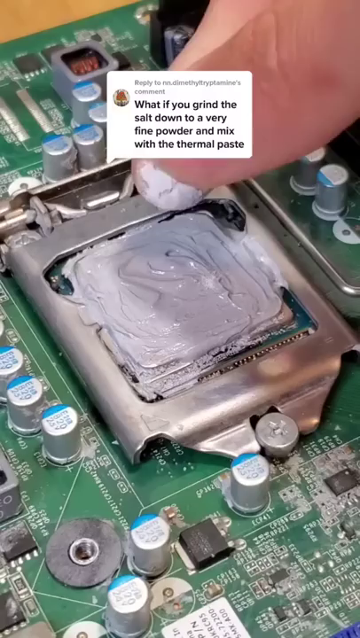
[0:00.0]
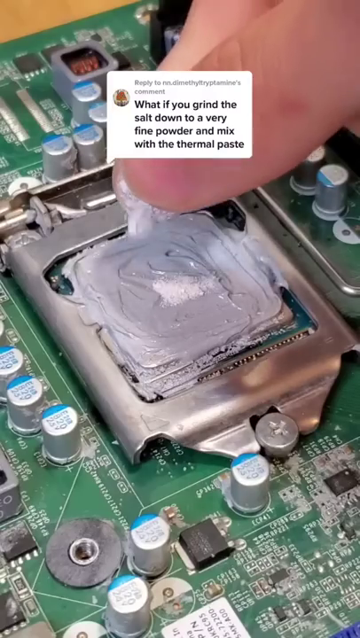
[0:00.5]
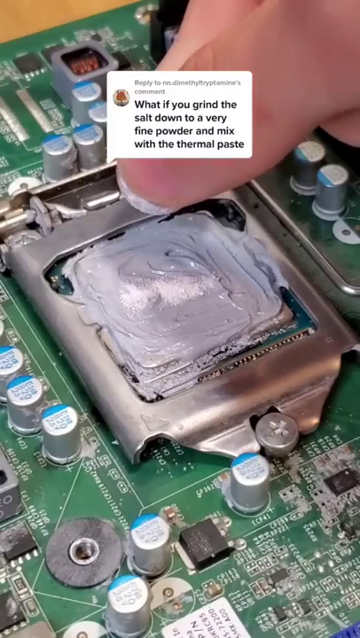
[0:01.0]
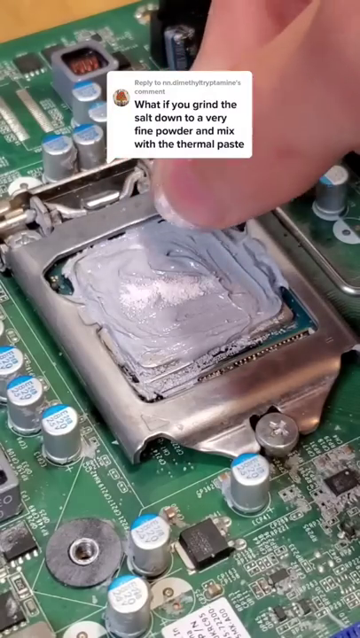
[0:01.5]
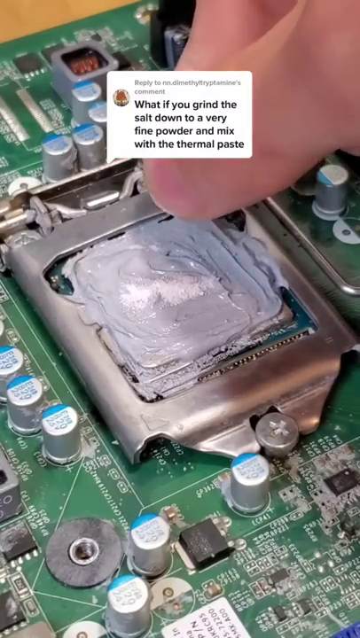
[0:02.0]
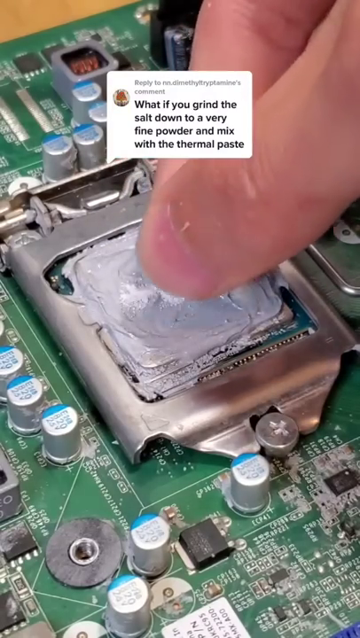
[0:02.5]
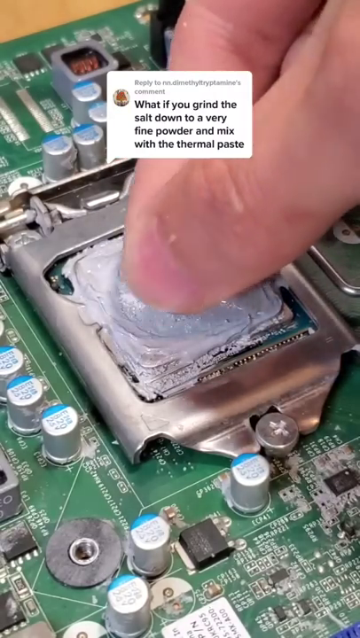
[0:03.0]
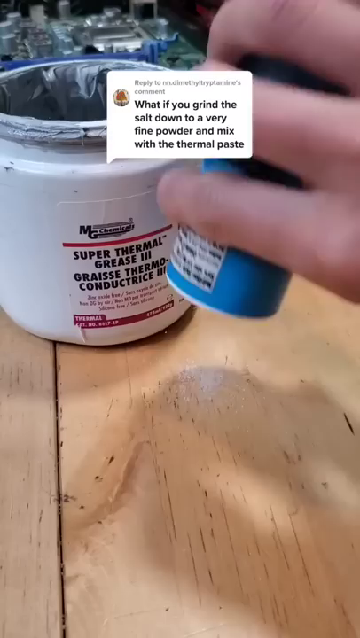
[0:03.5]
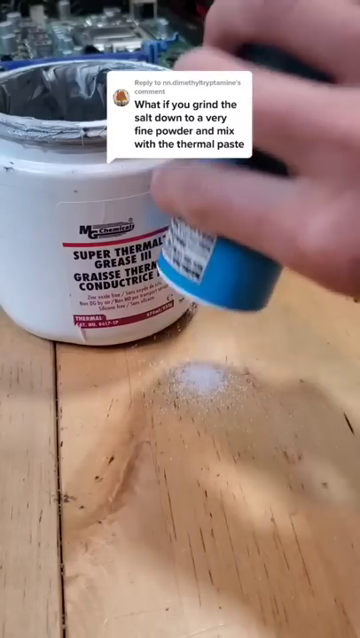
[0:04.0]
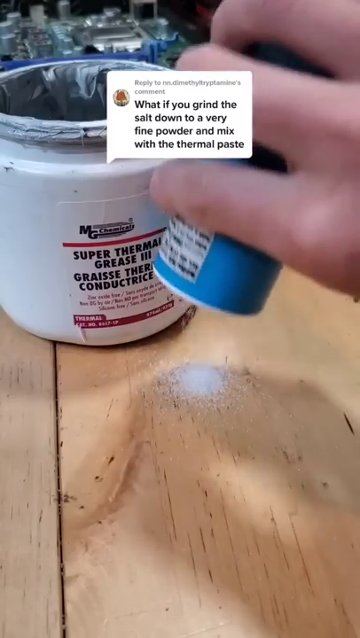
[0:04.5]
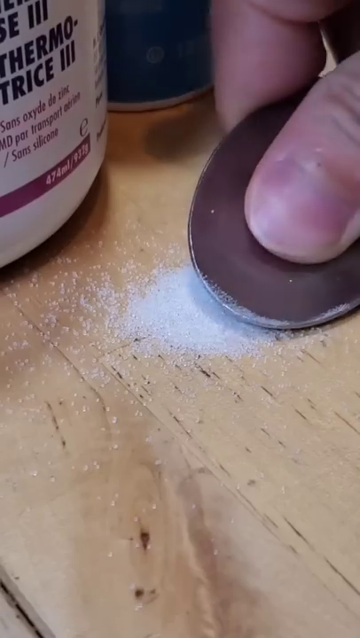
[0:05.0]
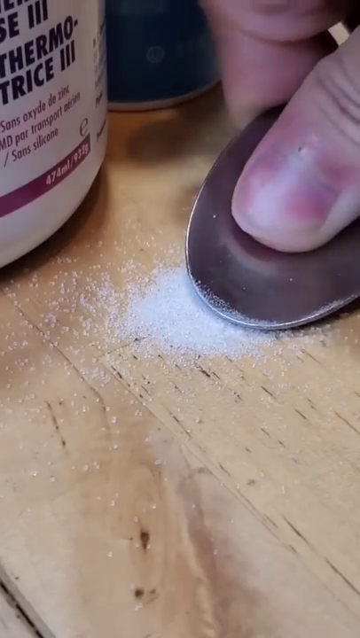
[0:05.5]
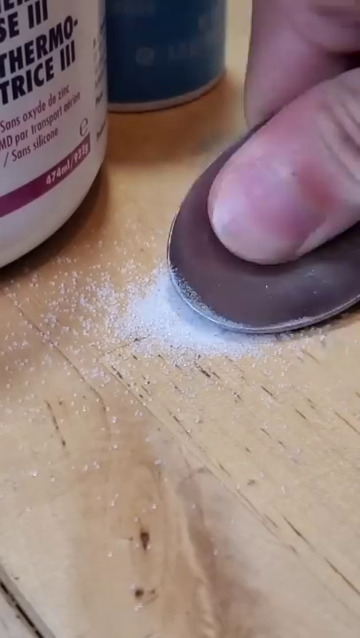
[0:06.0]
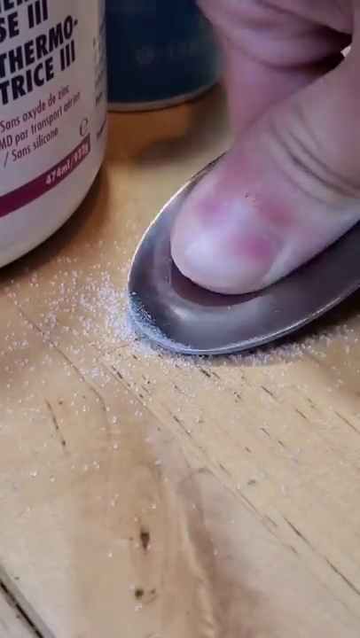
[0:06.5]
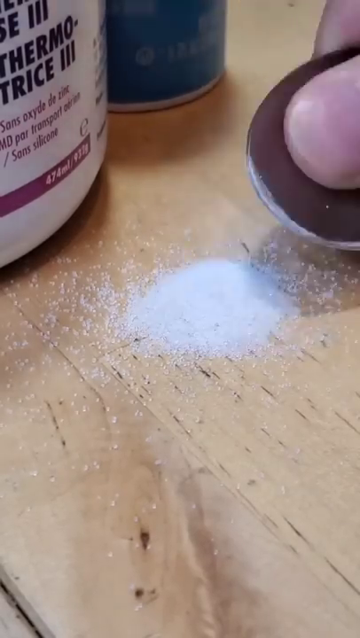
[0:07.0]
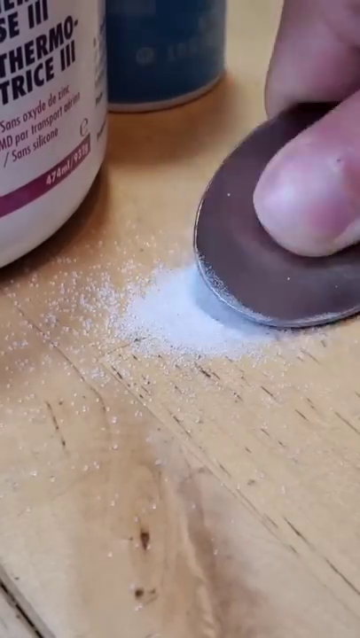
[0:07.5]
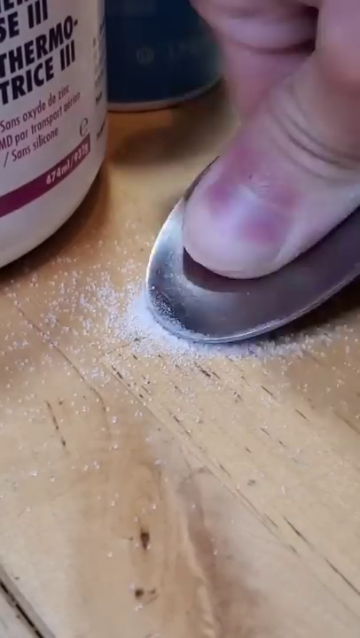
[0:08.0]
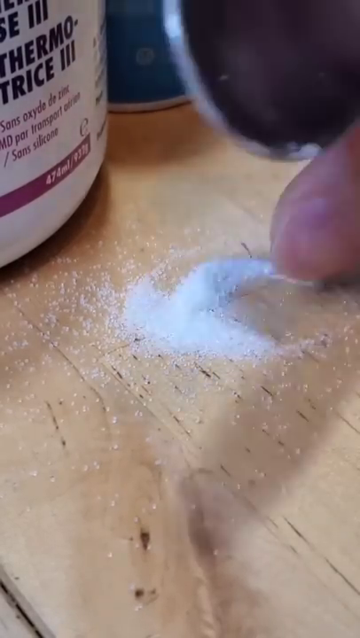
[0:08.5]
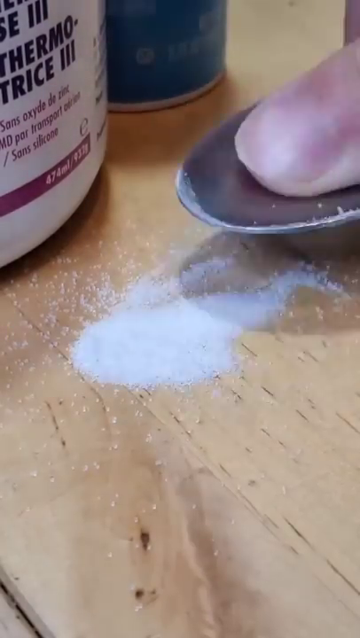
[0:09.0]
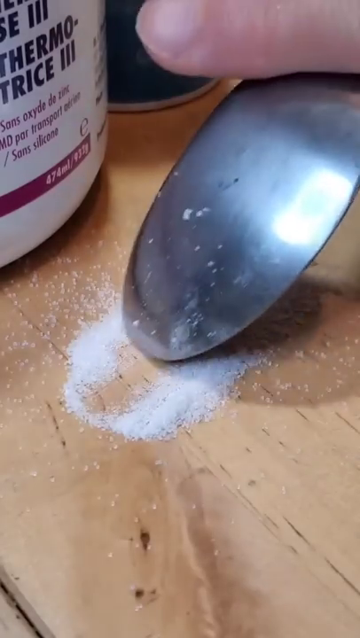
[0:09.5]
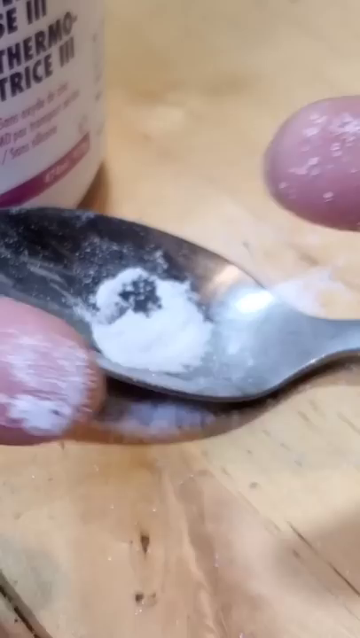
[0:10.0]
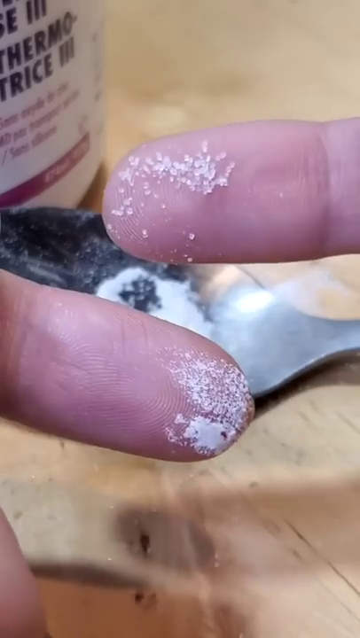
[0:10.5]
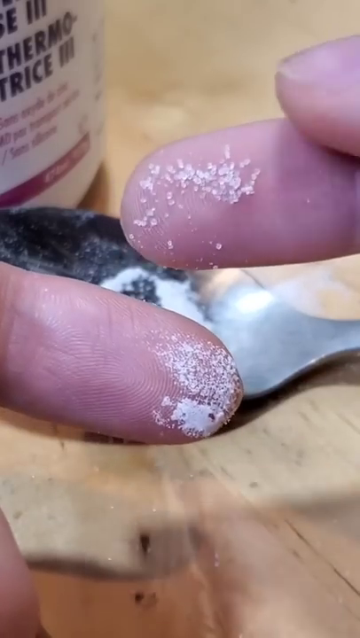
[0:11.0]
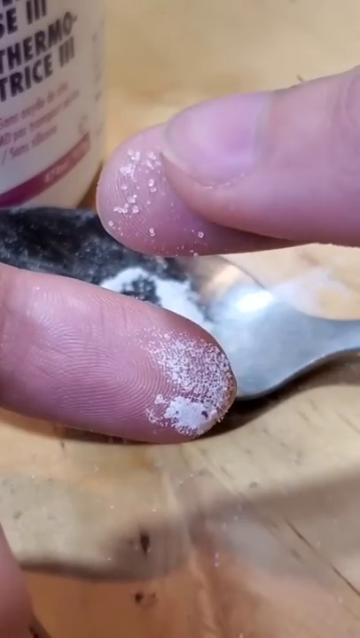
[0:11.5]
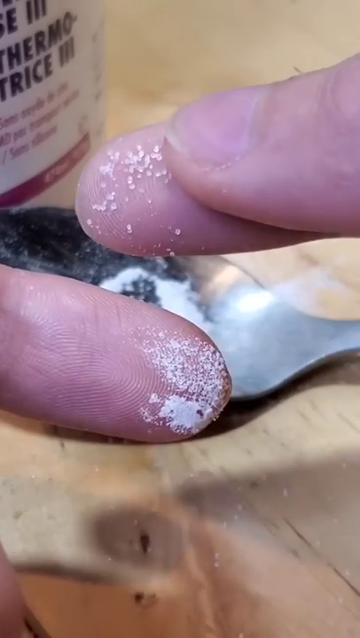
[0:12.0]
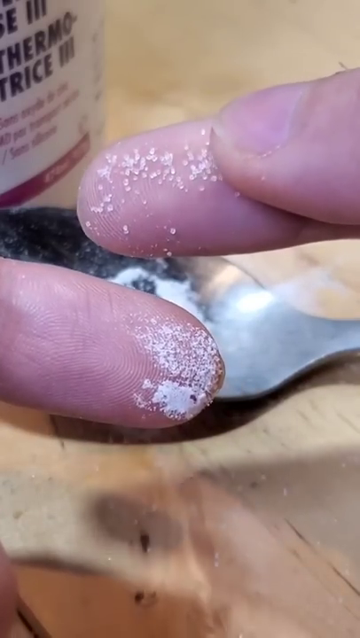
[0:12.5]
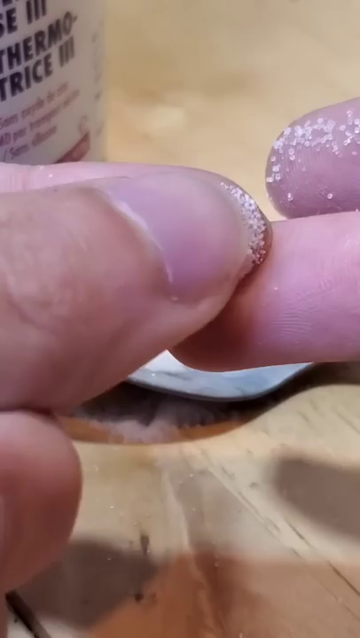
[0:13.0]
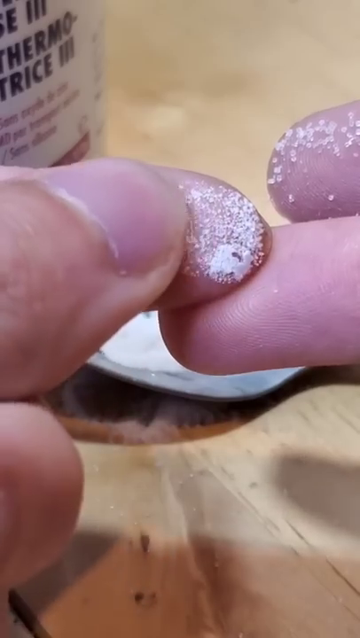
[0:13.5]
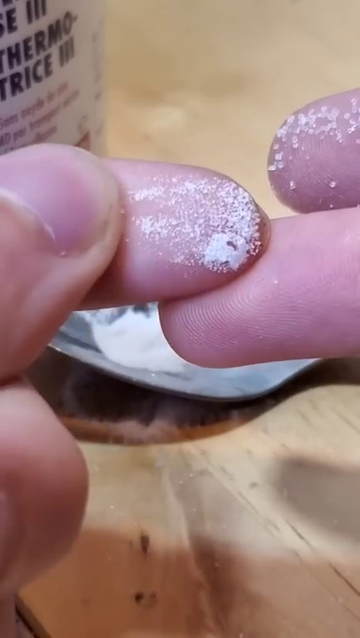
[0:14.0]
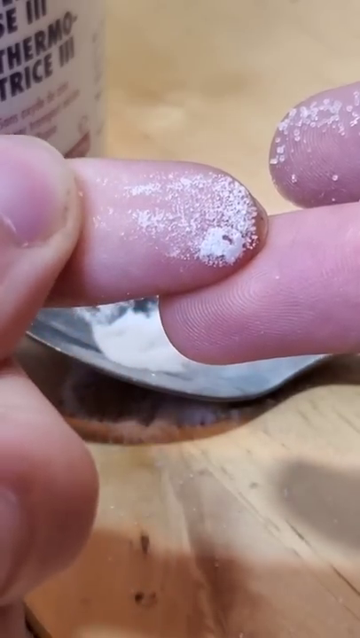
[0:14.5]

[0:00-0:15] A comment is posted over the top of the video, reading "what if you grind the salt down to a very fine powder and mix it with a thermal paste?" Behind it, a very fine powder is poured onto thermal paste on a CPU. Salt is then poured out of a salt shaker onto a wooden tabletop, and the back of a spoon presses down against the salt, with a thumb pressing against the spoon to provide pressure. Salt is then shown on two fingers, one in crystalline form and one in fine powder form, showing that it has been crushed from crystals into a fine powder; a finger runs across it so the texture can be seen.